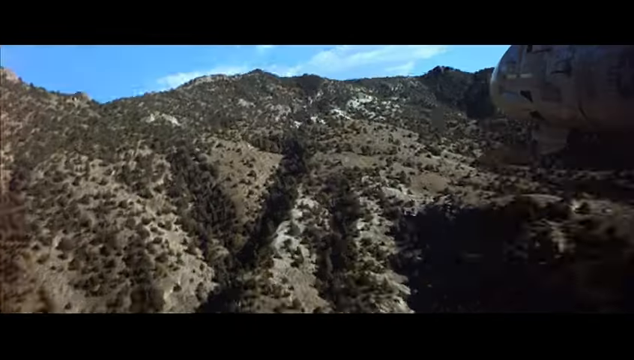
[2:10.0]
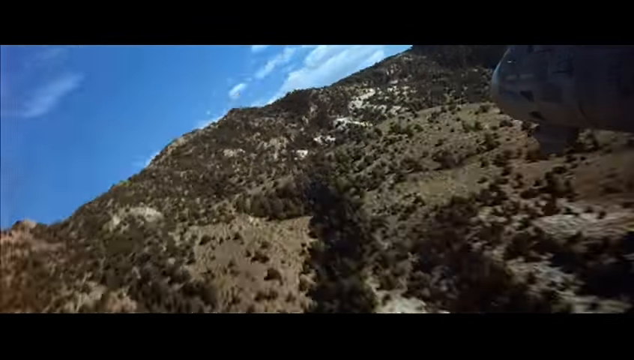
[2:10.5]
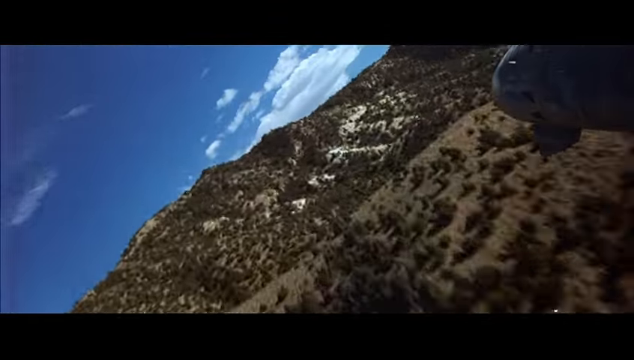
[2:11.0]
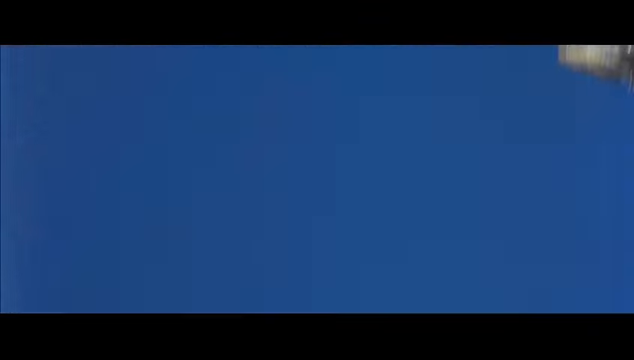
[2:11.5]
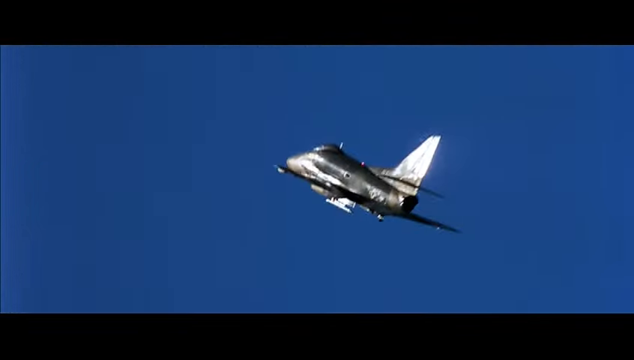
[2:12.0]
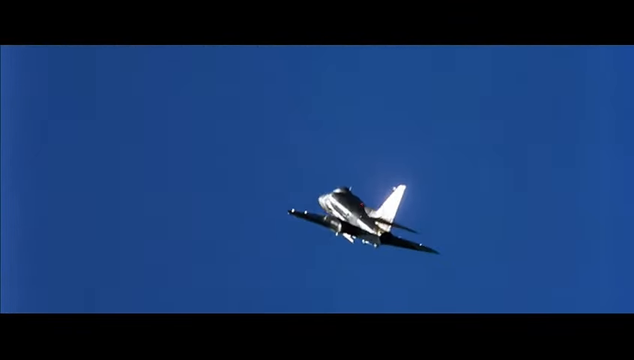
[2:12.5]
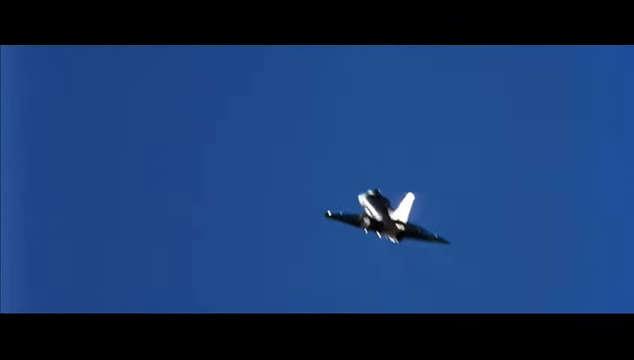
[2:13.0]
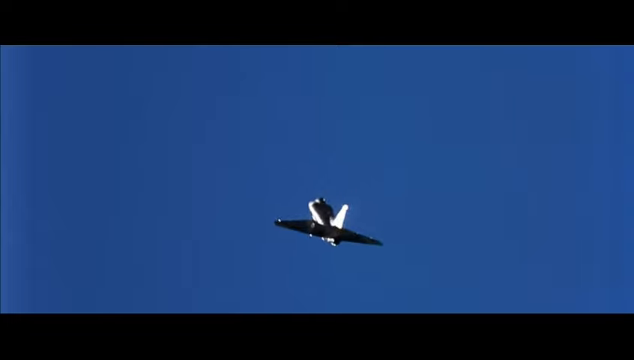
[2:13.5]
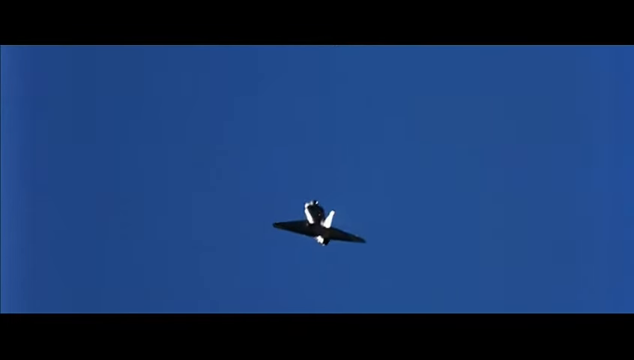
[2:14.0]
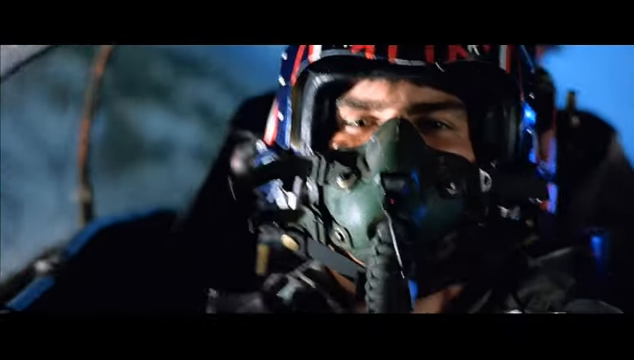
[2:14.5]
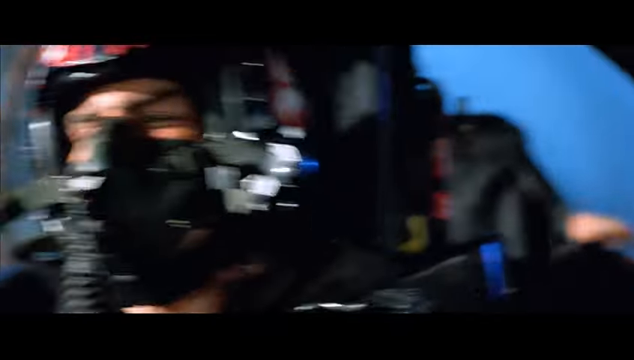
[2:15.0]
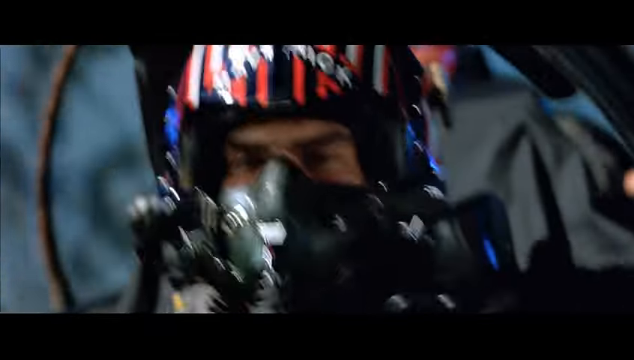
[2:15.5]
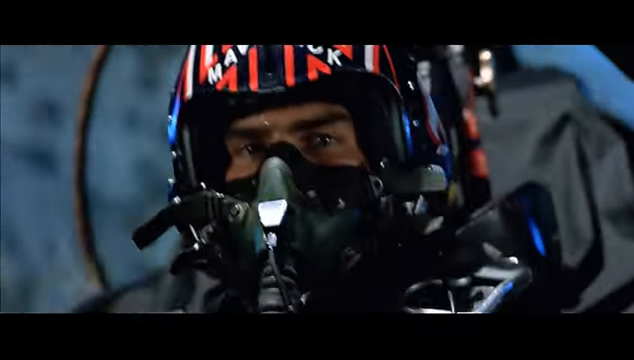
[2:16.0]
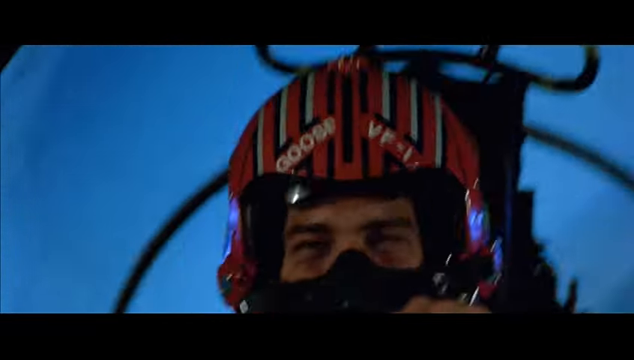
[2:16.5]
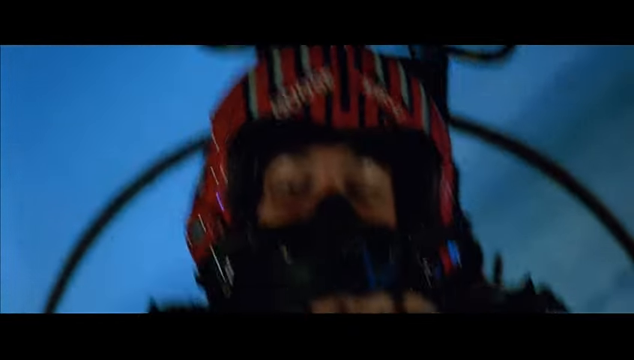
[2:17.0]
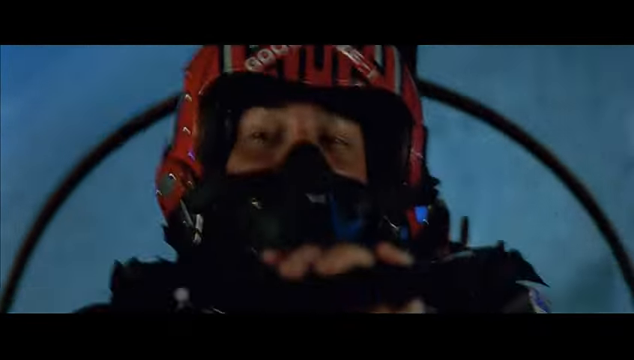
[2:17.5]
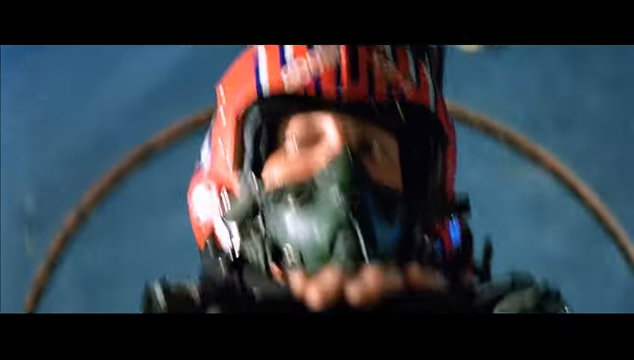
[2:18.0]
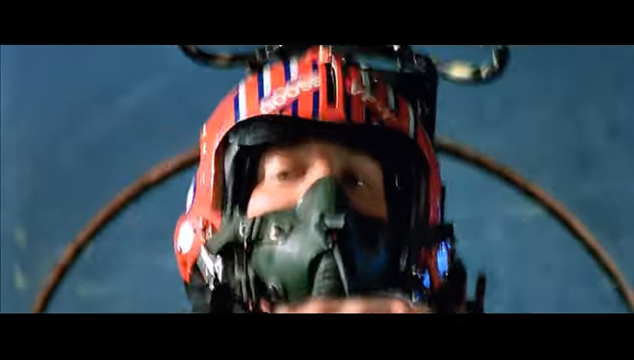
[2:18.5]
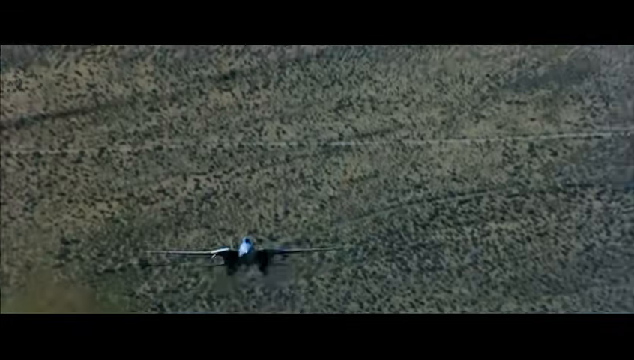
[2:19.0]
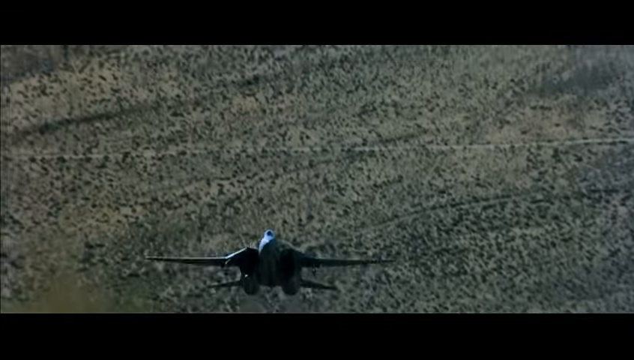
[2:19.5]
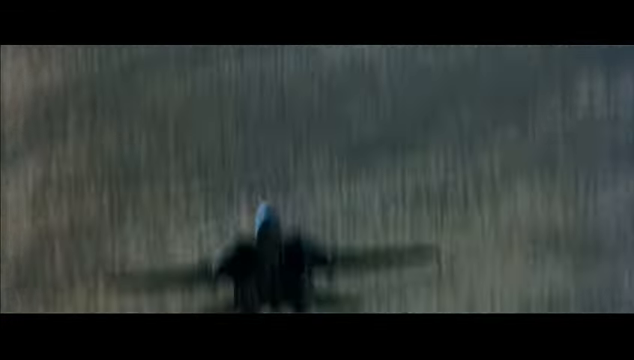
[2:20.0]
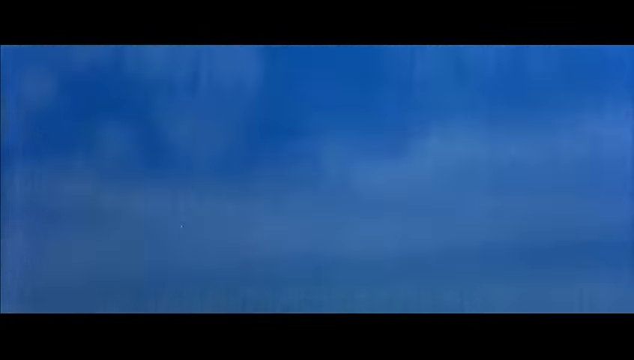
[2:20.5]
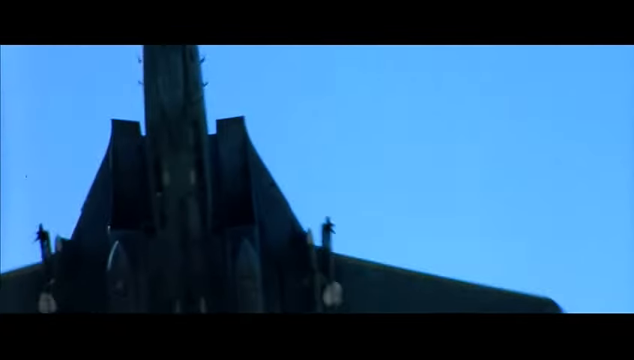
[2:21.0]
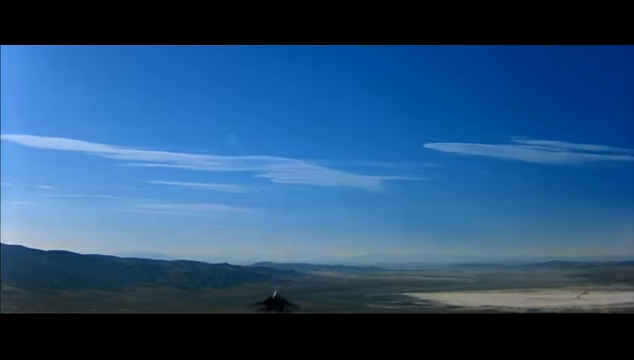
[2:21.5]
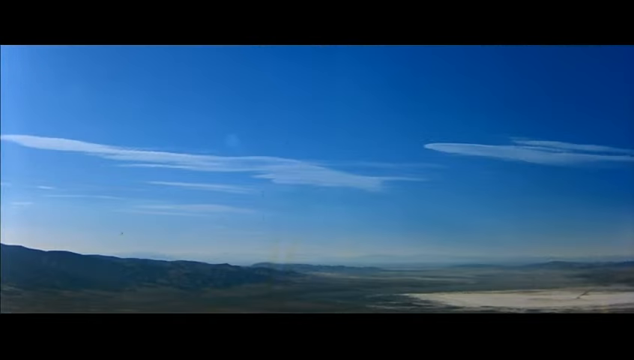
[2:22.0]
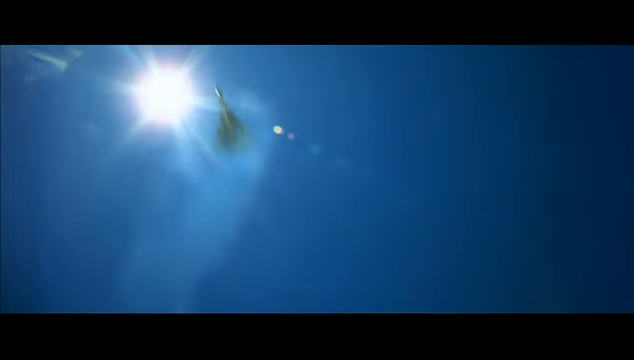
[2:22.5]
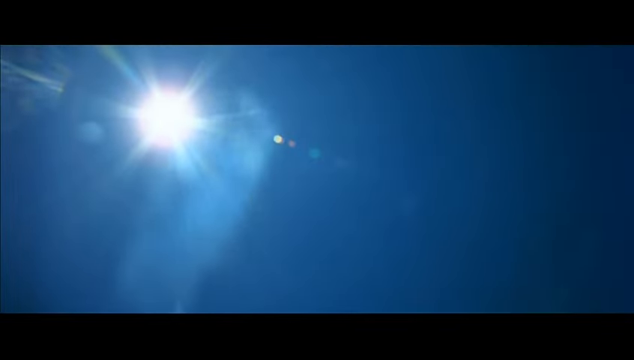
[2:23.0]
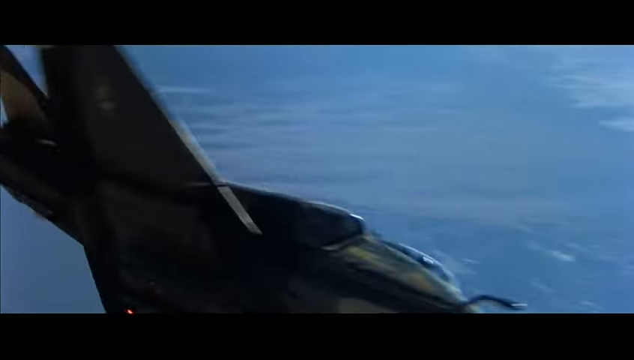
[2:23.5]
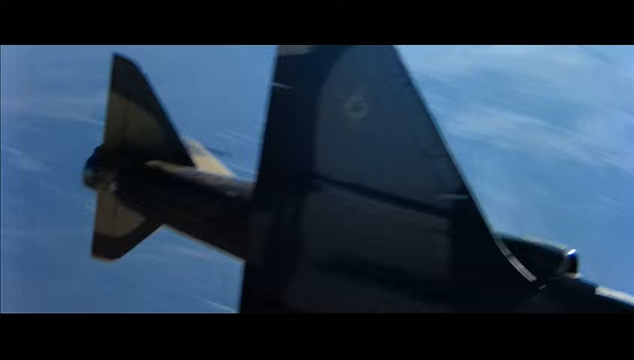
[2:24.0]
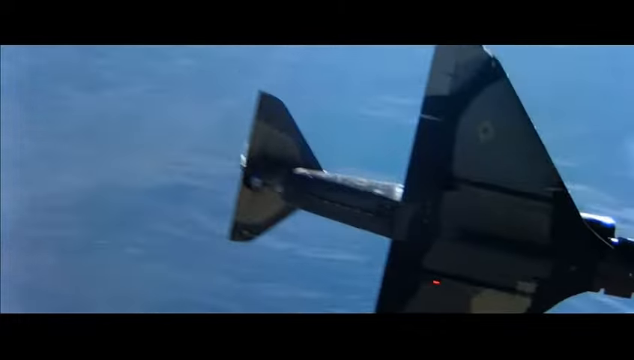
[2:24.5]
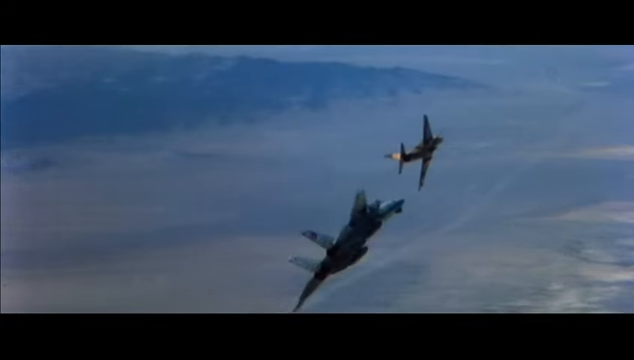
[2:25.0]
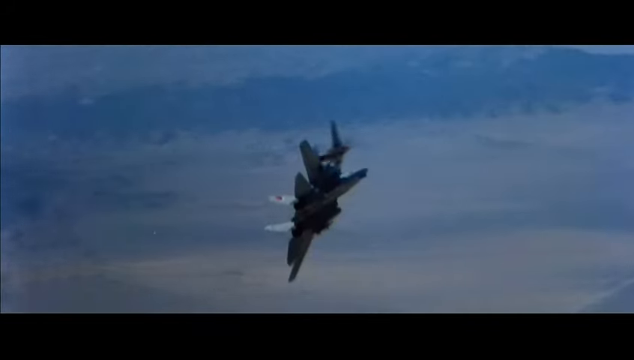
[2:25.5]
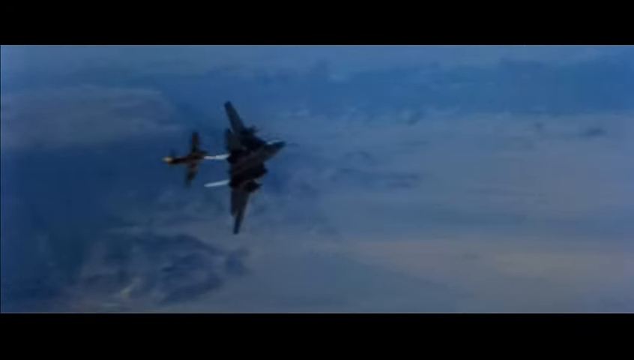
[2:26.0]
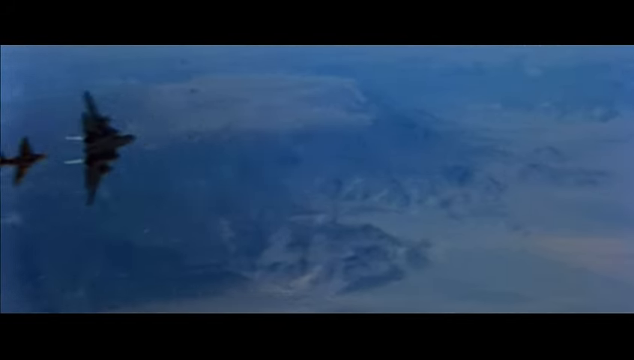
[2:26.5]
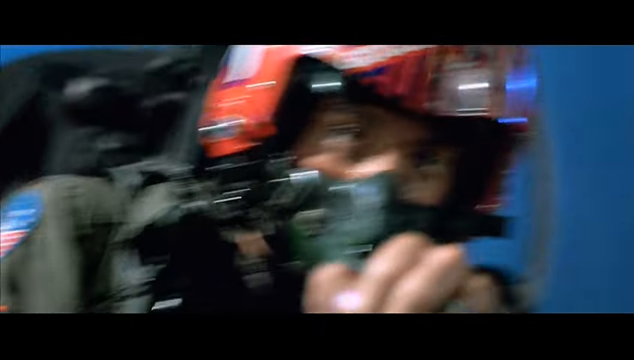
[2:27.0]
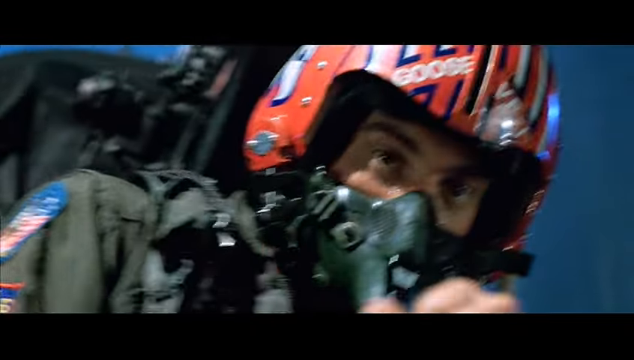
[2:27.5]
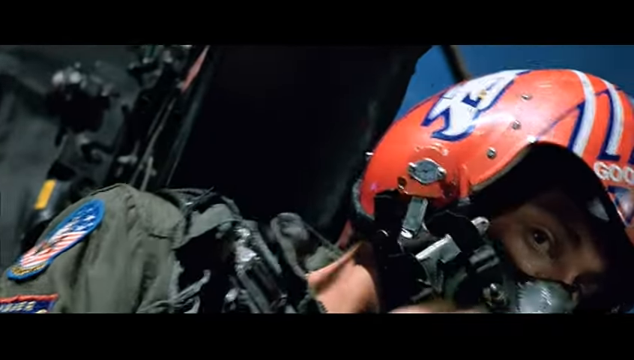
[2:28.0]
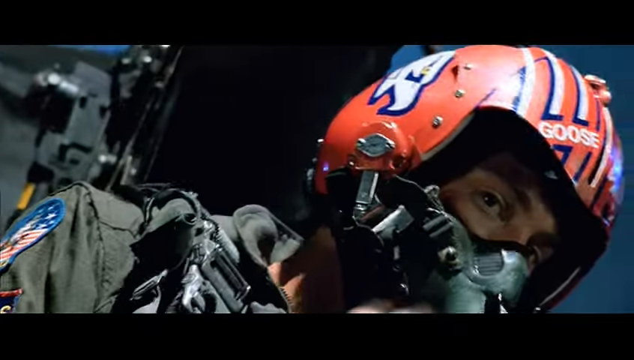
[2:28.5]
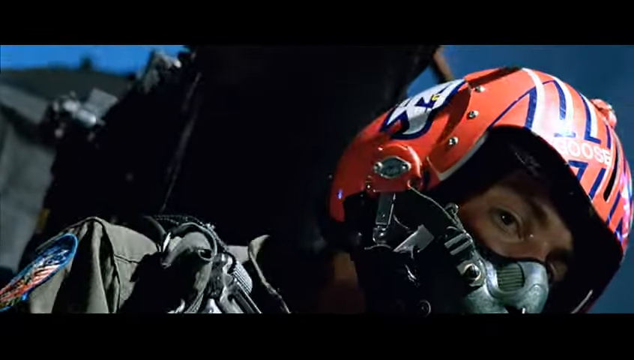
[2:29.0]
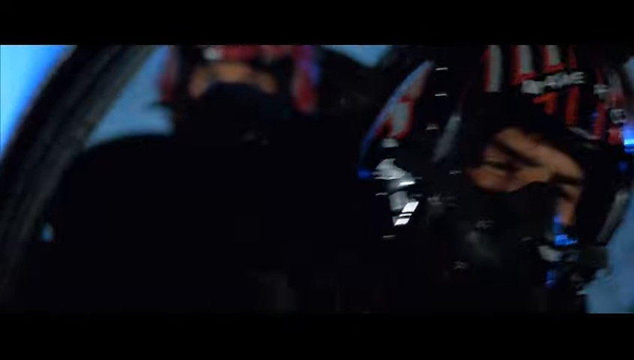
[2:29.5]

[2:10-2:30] A shot from the side of a plane looks over rocky terrain with green trees and shrubs, with part of the plane the camera is attached to visible at the top right of the screen. A shot from below looks up at the plane flying through the sky. The cockpit has two pilots in it; the pilot at the back wears a black helmet with the word "Goose" written on it and an oxygen mask. From the ground looking up, the two planes are both on their sides, spinning around, before a cut back to the cockpit. It looks like the planes are trying to outrun each other. The two pilots in the cockpit are having a conversation with each other.